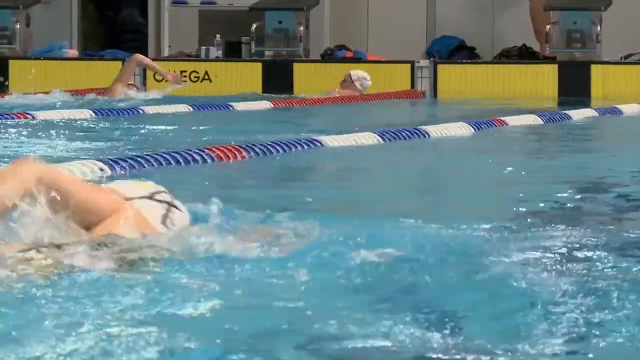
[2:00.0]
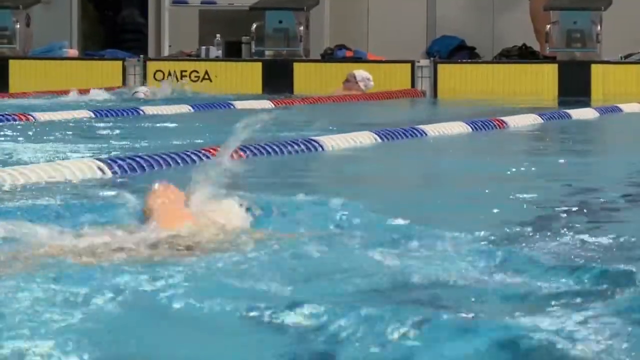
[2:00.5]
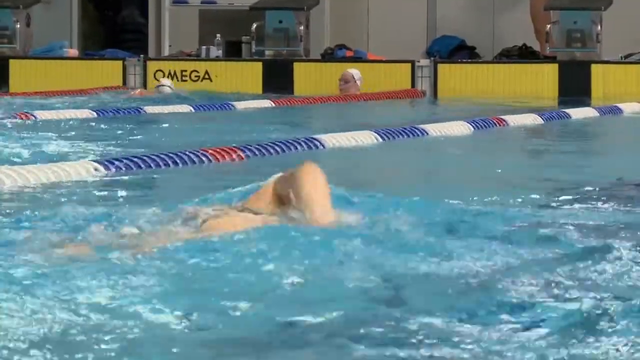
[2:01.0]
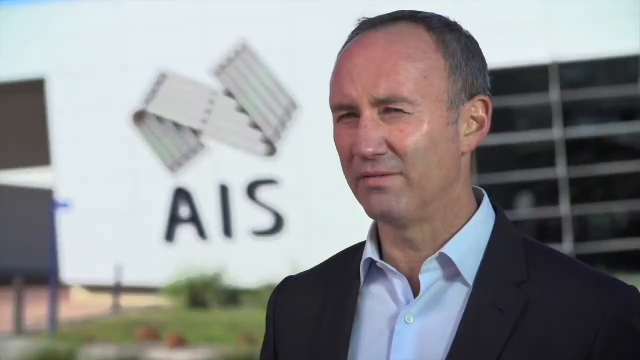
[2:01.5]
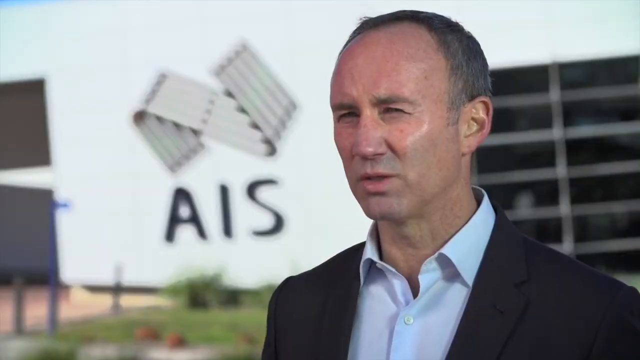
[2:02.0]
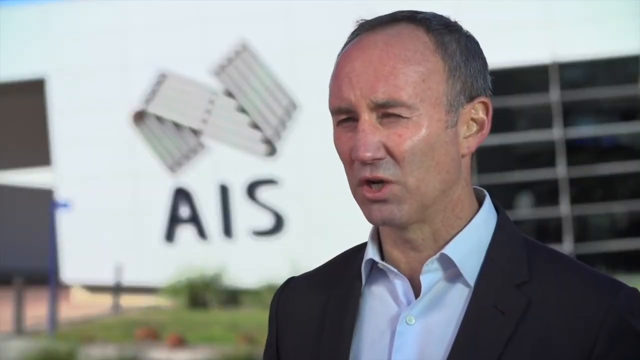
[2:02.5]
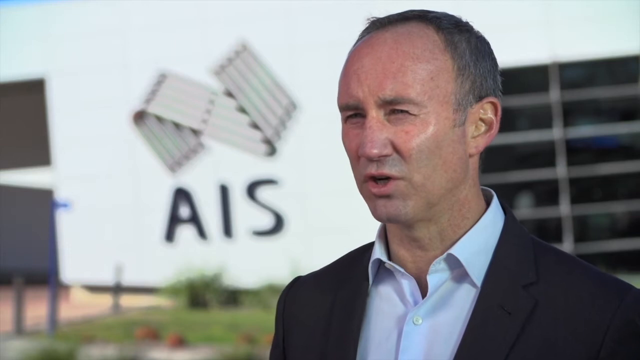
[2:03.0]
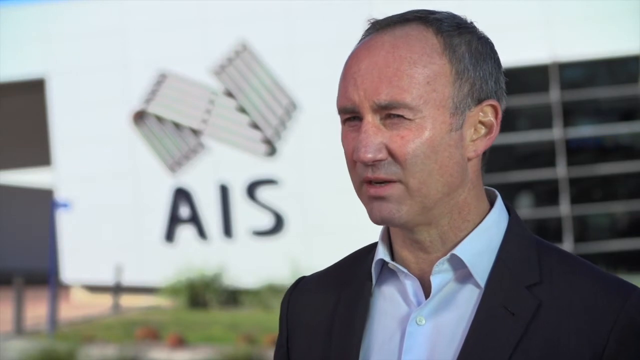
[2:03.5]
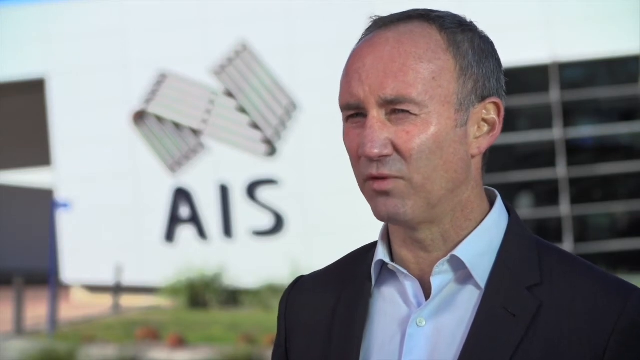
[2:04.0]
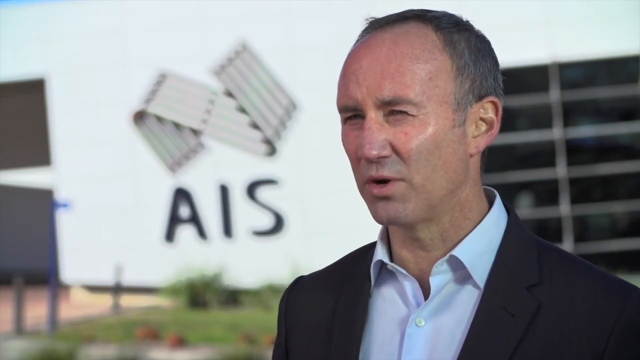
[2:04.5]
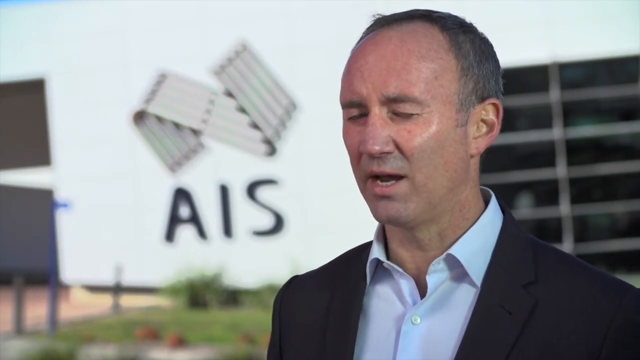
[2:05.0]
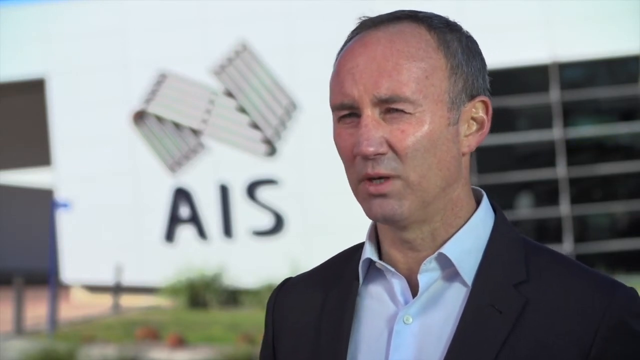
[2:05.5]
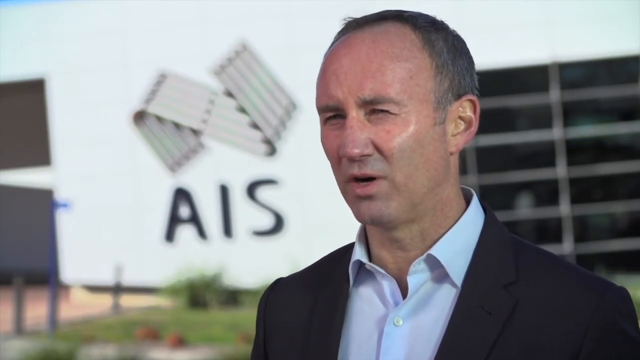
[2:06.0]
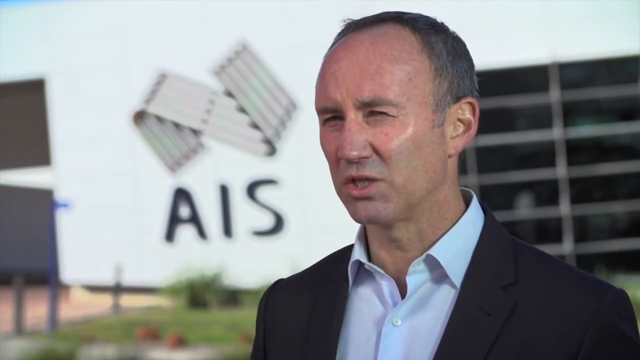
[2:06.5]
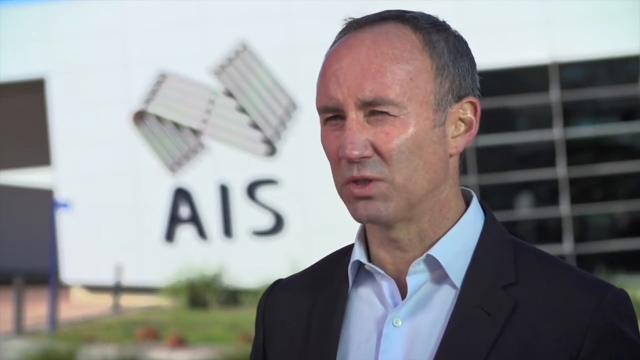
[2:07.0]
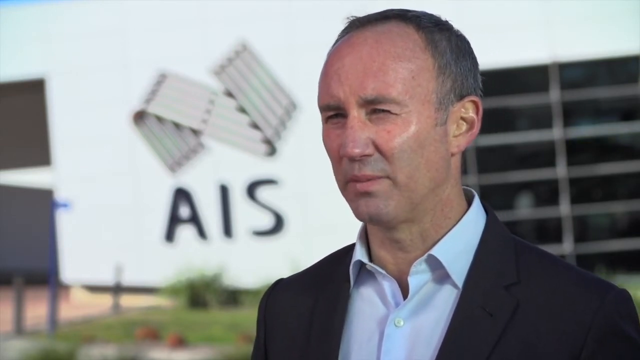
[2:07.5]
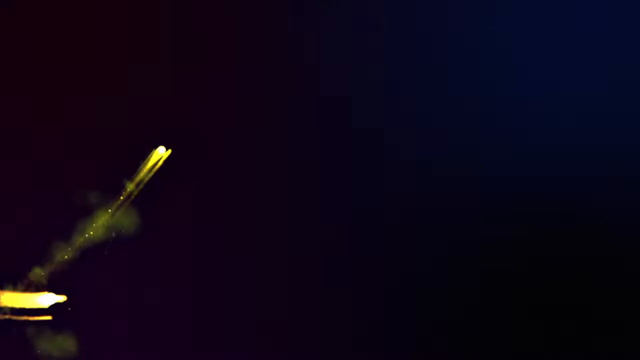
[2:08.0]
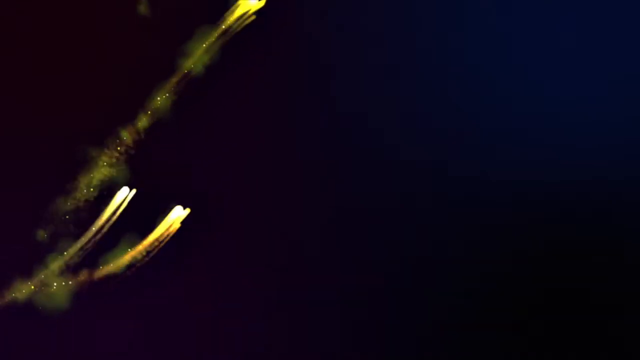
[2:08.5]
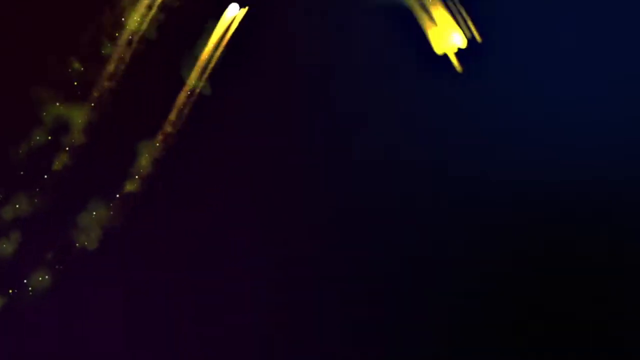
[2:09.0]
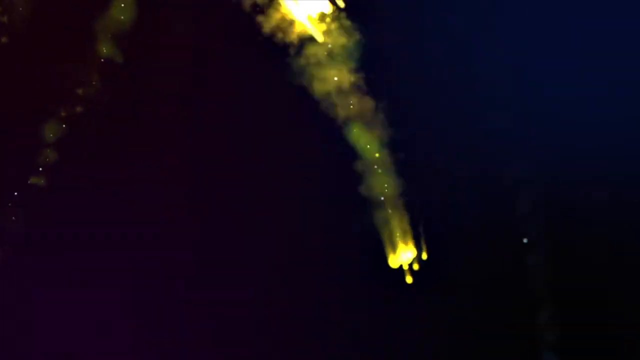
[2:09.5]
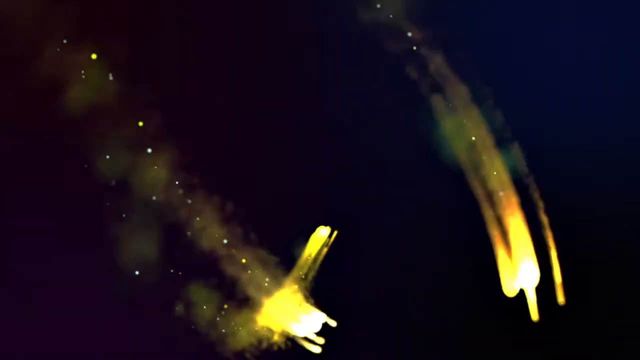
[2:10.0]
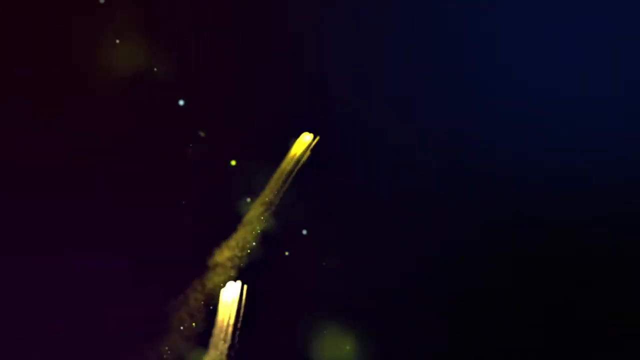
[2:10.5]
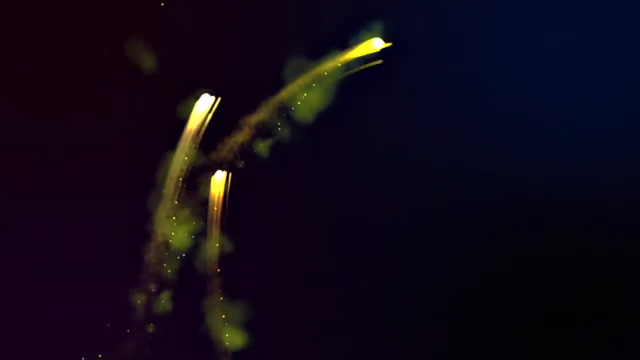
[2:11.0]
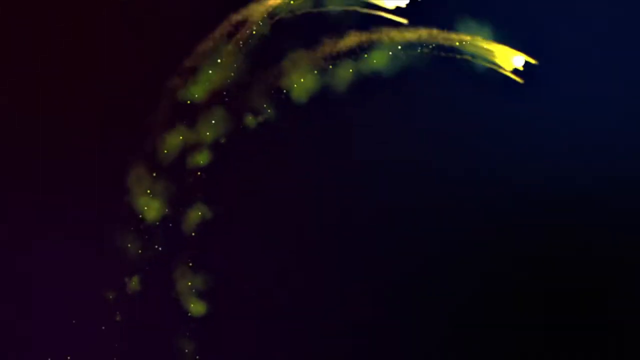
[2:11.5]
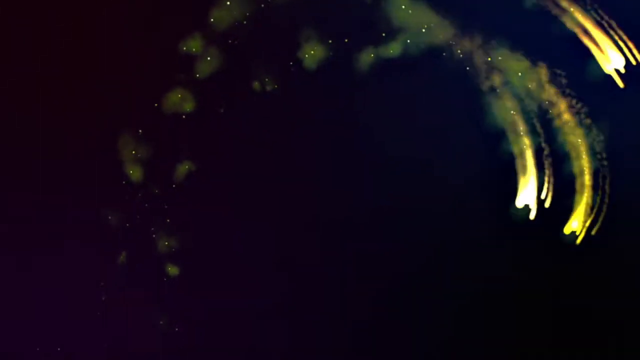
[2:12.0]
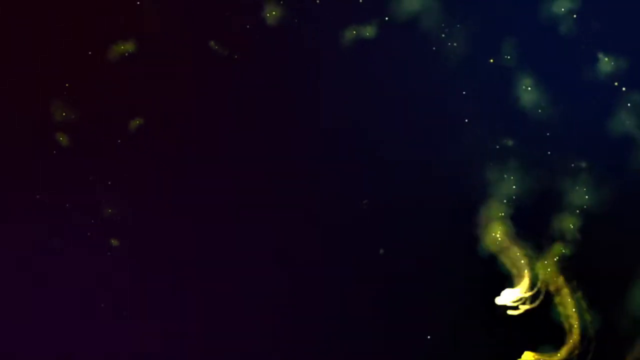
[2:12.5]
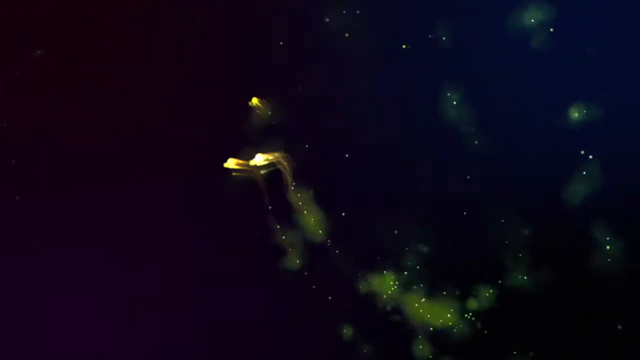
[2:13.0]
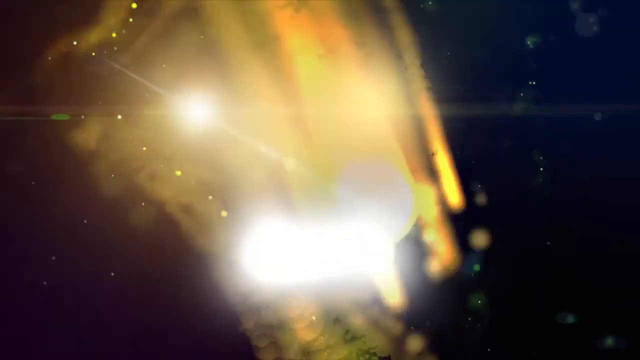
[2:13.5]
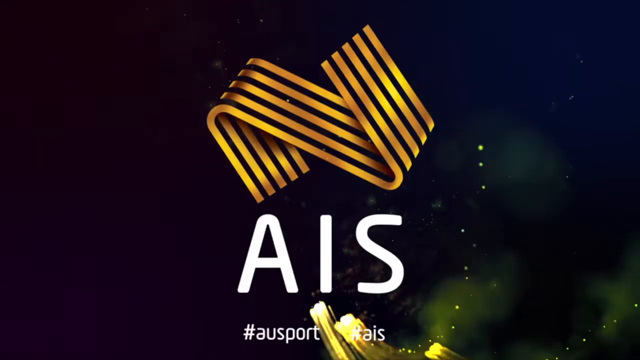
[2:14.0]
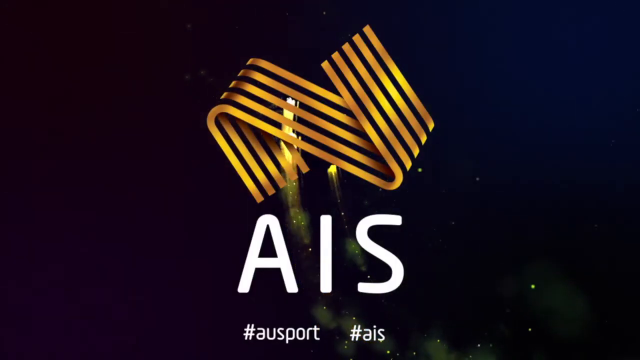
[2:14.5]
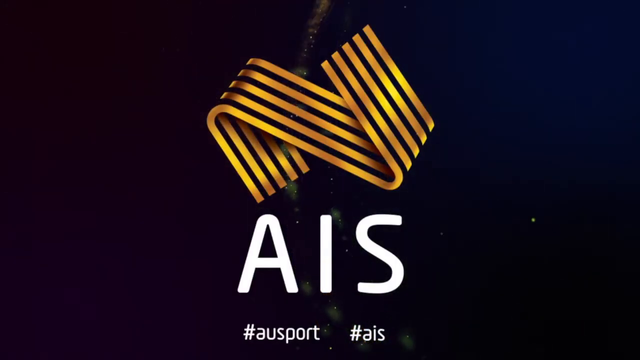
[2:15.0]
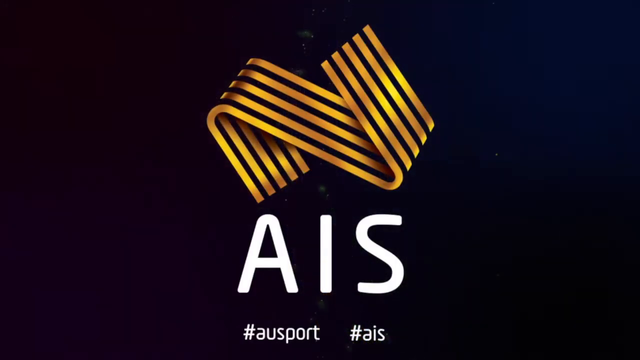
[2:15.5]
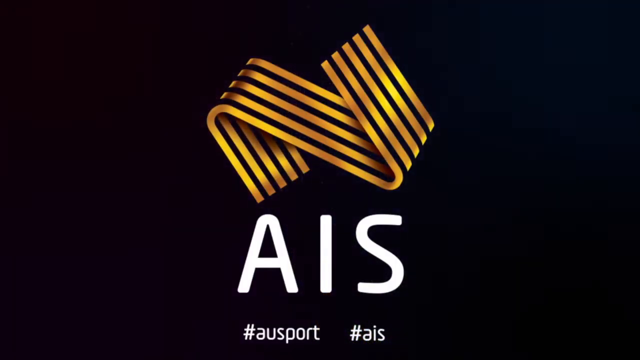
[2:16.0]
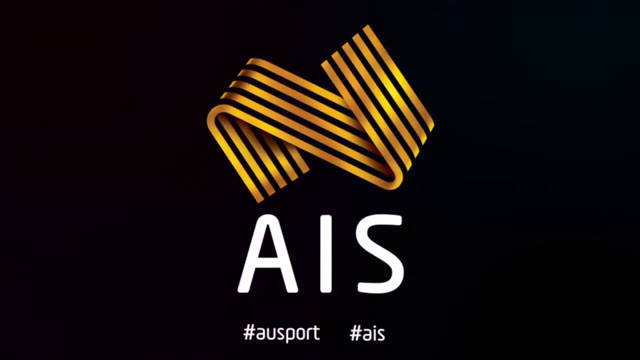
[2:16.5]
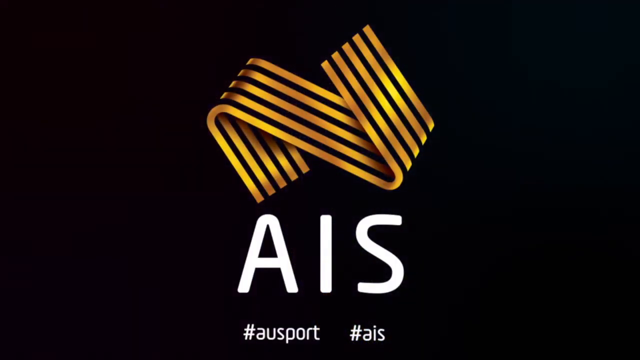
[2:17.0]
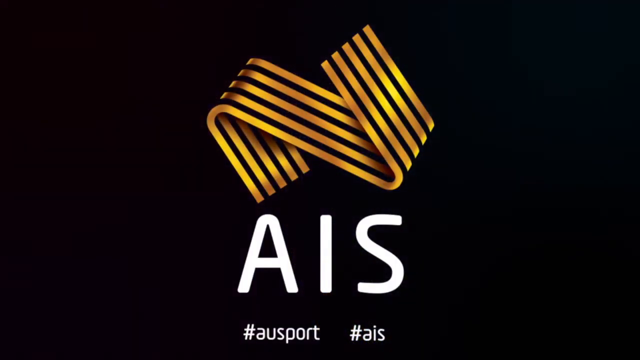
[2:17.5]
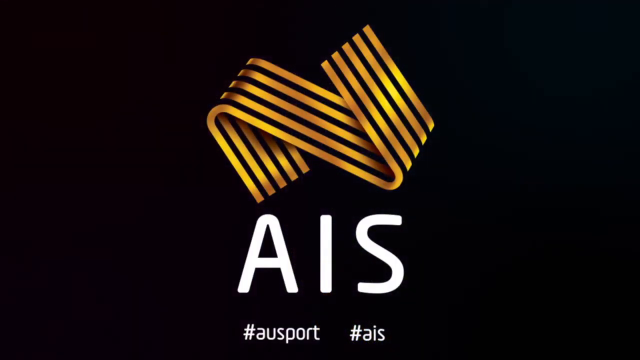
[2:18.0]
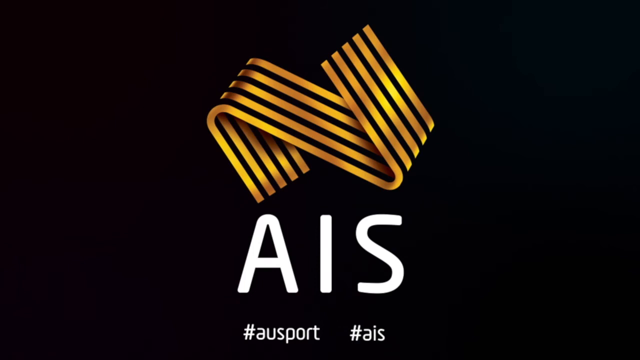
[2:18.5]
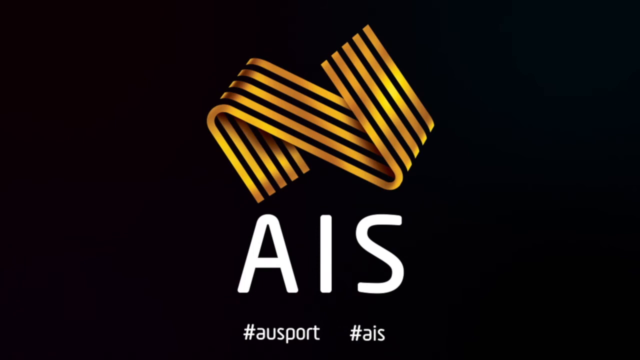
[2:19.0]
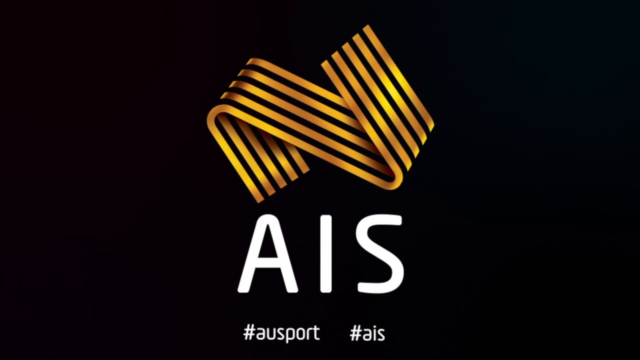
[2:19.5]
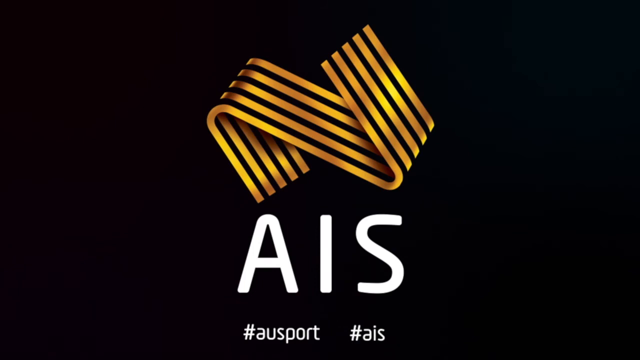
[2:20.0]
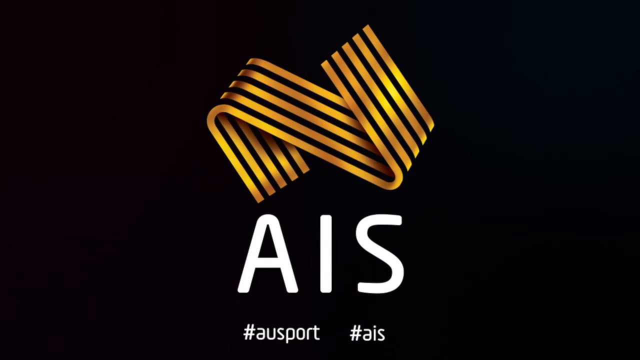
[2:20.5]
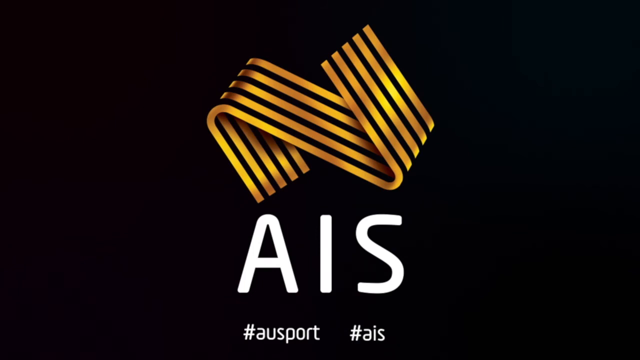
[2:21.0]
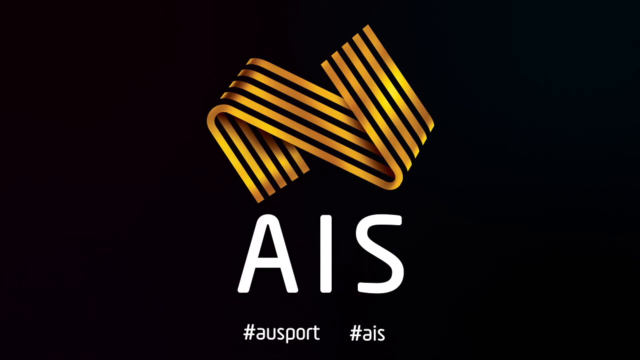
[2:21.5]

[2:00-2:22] More scenes show a swimming competition in an Olympic-sized pool, presumably in Australia. In the background, "Omega" is written on a board or something. The video shifts back to the director, whose last name is Fabier, speaking apparently in front of a building, probably the AIS headquarters, with a big sign showing the AIS logo and "AIS" underneath it. Next come graphics of gold-colored rockets going through the air, kind of like fireworks. It concludes with the AIS logo with a couple of hashtags underneath, one reading "#AIS".